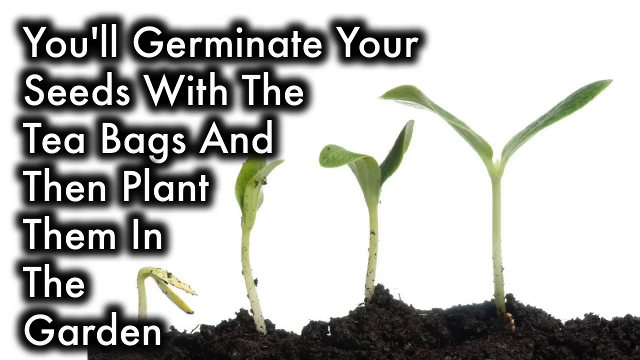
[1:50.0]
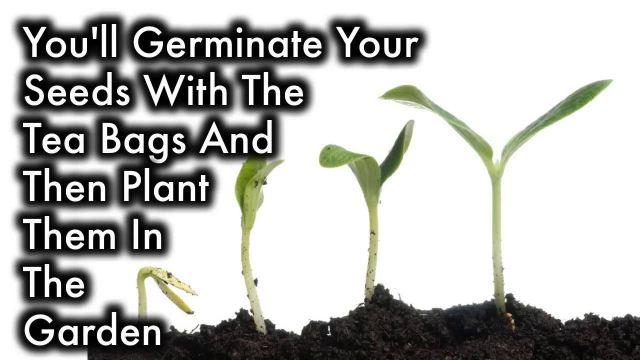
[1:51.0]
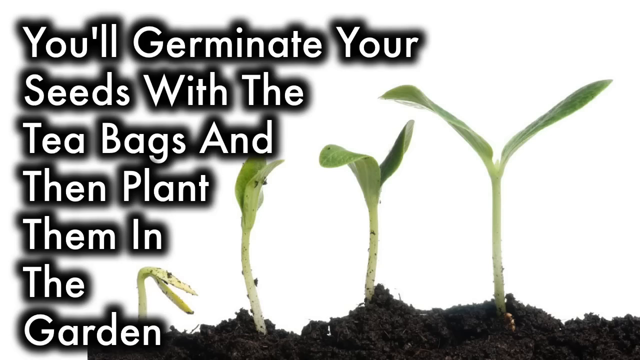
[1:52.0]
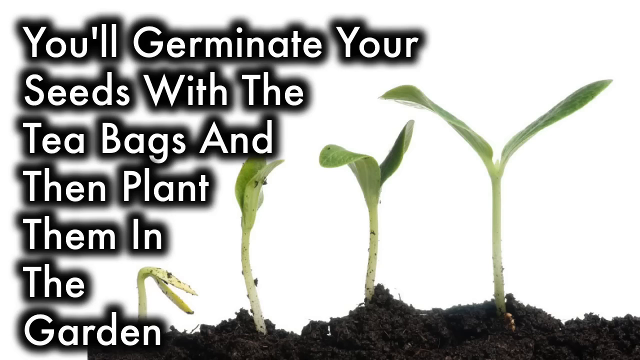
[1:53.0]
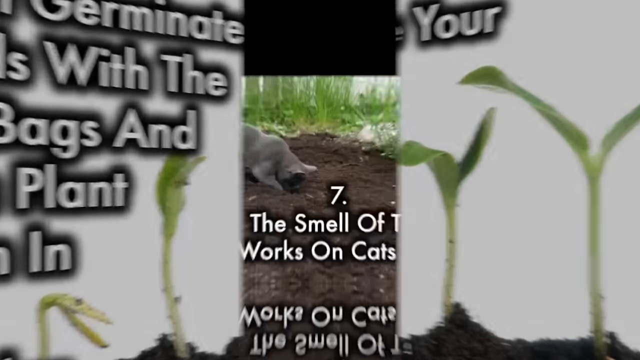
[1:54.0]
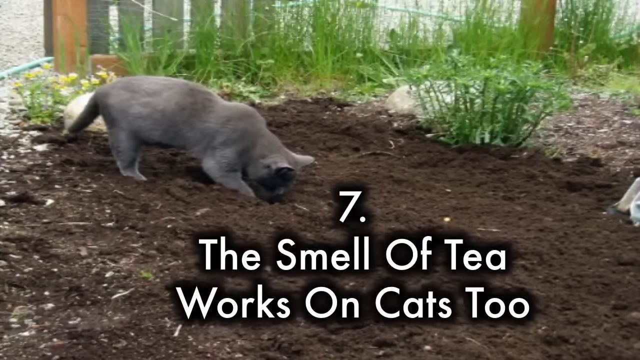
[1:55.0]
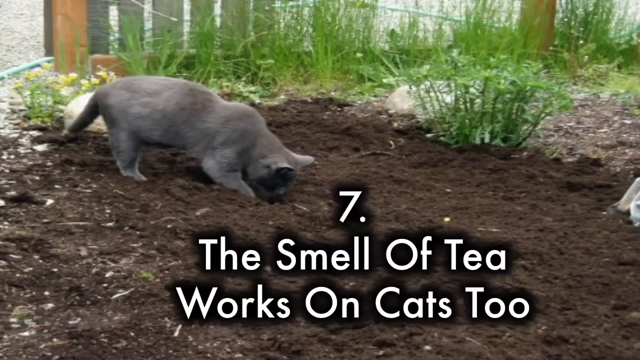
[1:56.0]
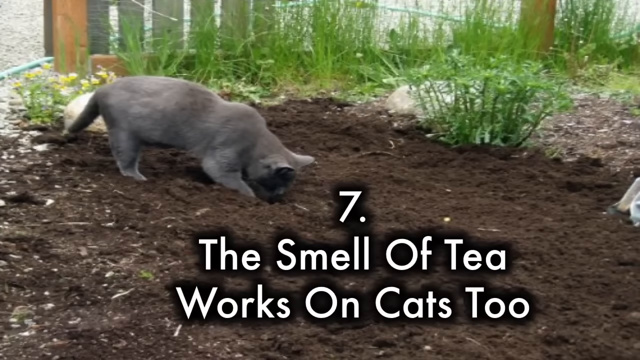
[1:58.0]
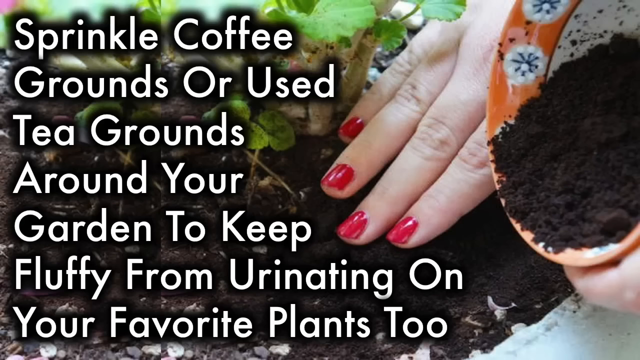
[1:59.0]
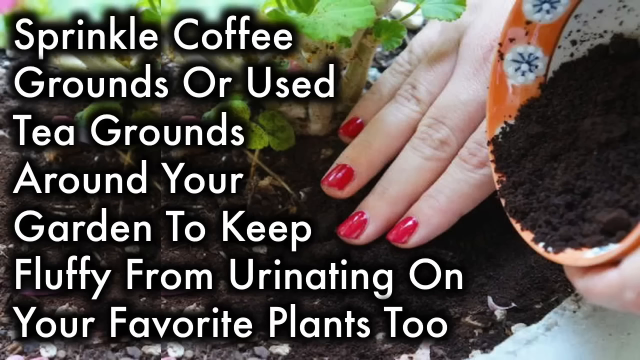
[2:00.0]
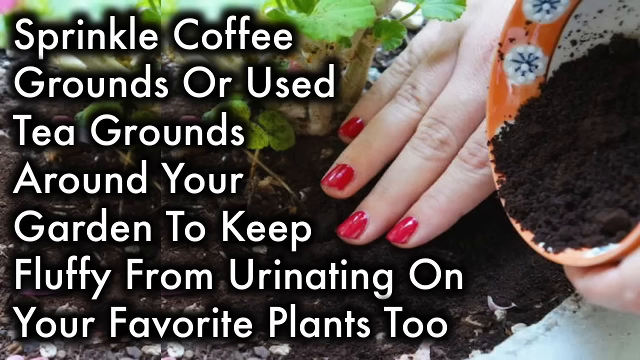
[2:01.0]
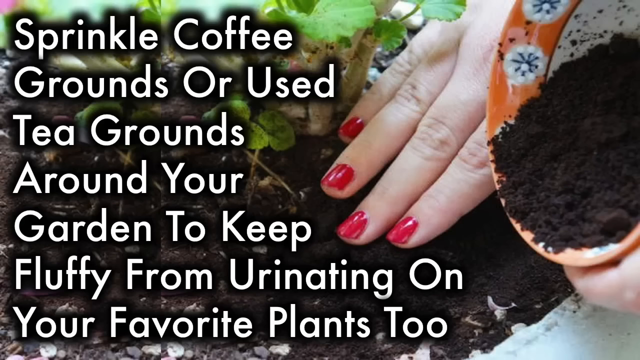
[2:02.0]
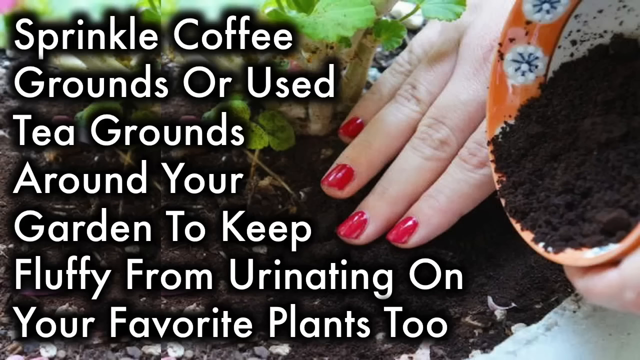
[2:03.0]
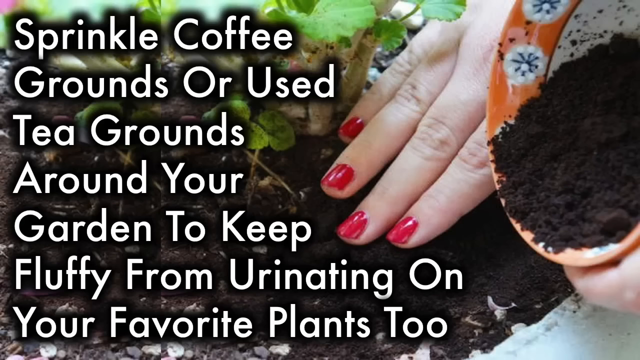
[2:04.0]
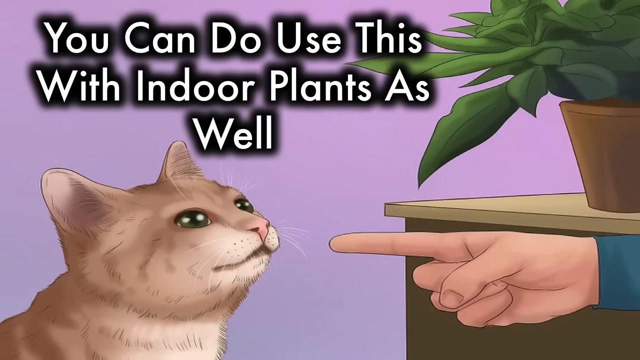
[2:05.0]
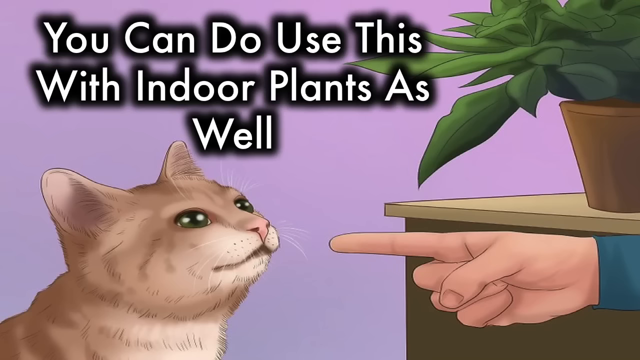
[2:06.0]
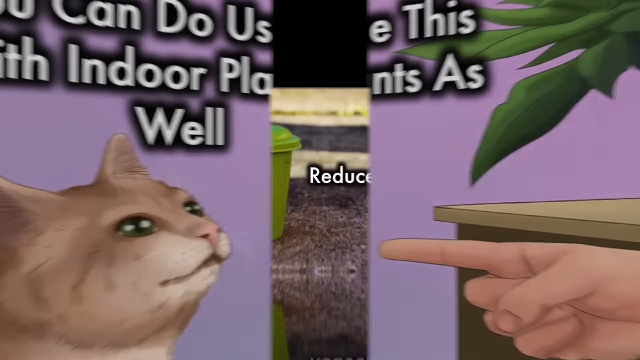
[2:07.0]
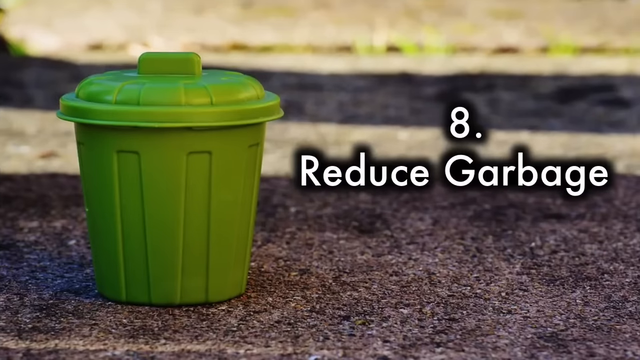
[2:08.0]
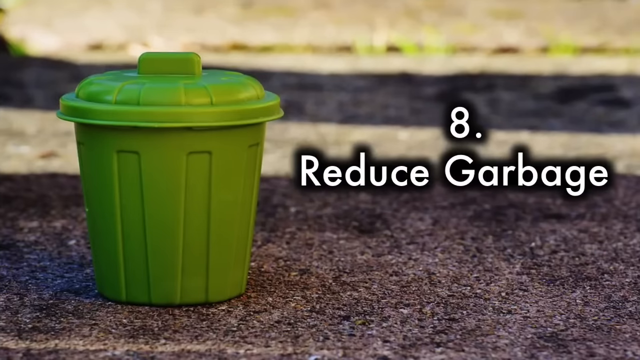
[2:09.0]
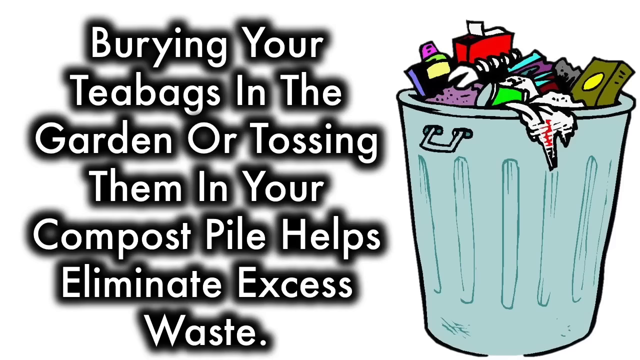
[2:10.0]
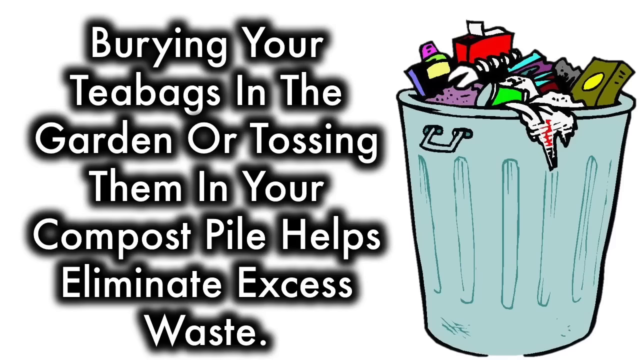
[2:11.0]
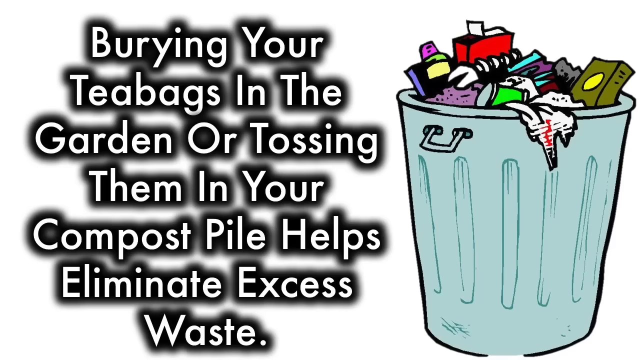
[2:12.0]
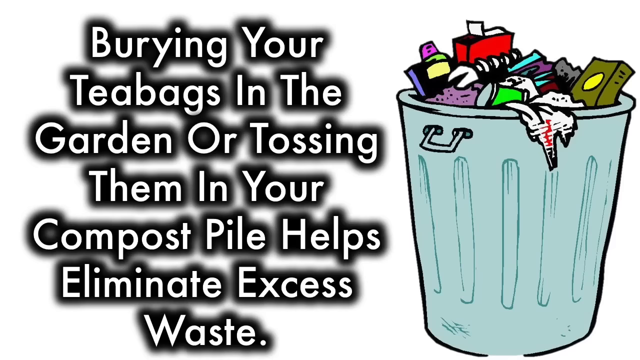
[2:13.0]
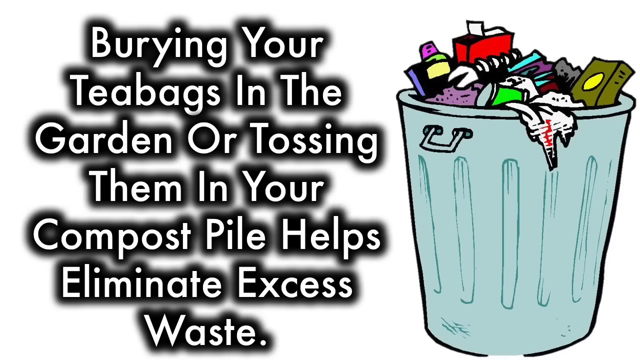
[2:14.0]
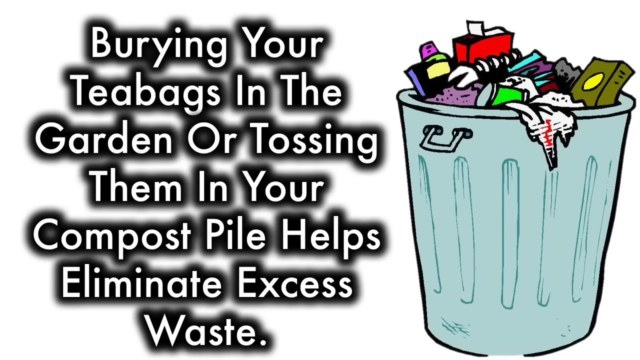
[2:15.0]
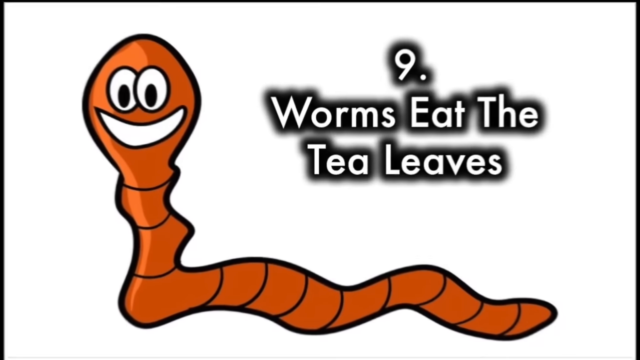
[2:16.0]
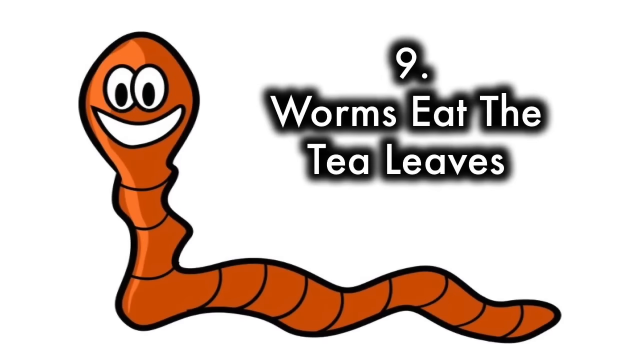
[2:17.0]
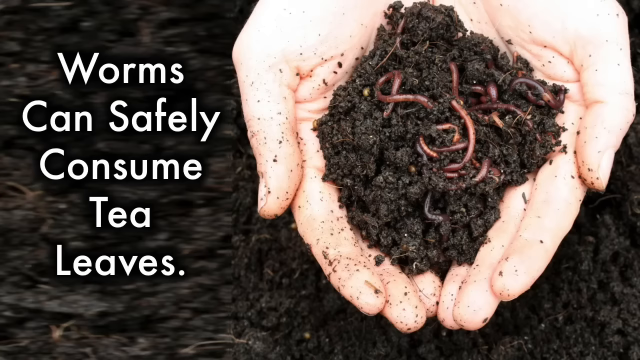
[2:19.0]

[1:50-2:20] Text explains germinating seeds with the tea bags and then planting them in the garden. The seventh point appears: "The smell of a teabag works on cats, too." A very big cat is trying to dig. The text reads: "Sprinkle a coffee grounds or used tea grounds around your garden to keep fluffy from urinating on your favorite plants too," and a woman with red painted nails is spreading coffee. Text notes this can be used with indoor plants as well. An image shows a curtain with the owner pointing fingers at it. A point about reducing garbage appears with a green basin and the text "Burying your tea bags in the garden or tossing them in your compost pile helps eliminate excess waste." The ninth benefit follows, showing worms eating tea leaves.